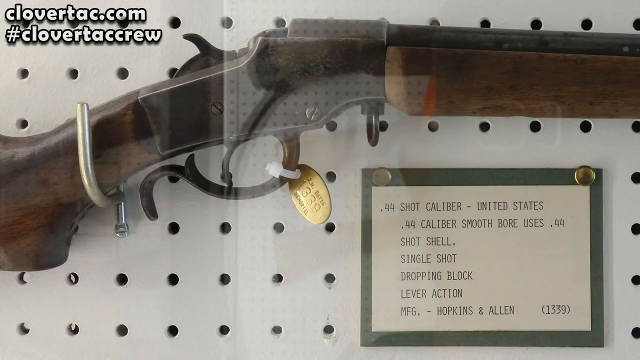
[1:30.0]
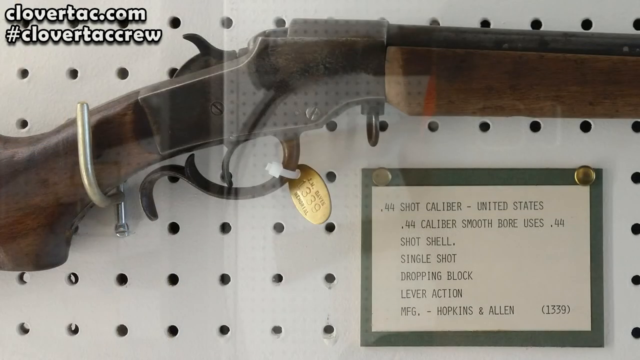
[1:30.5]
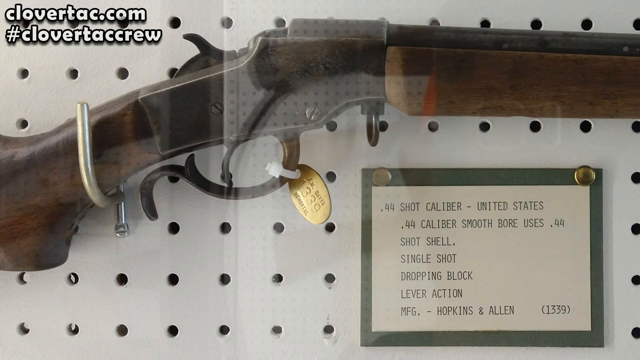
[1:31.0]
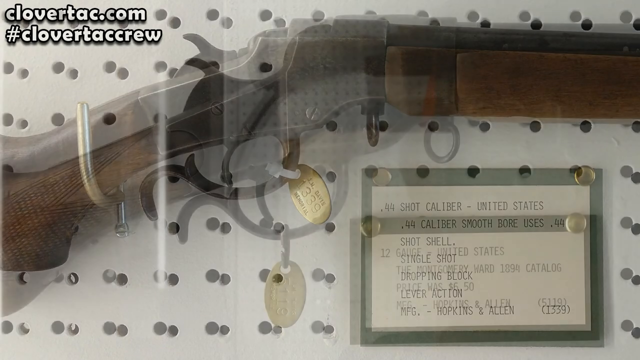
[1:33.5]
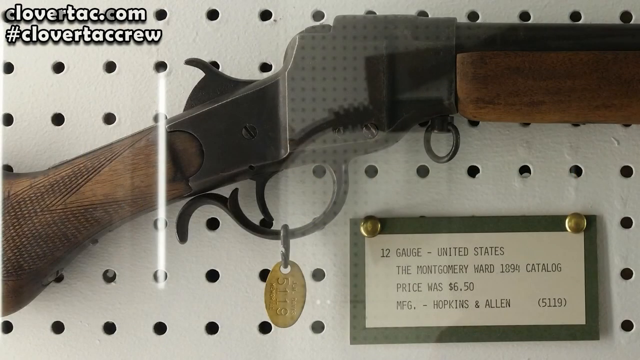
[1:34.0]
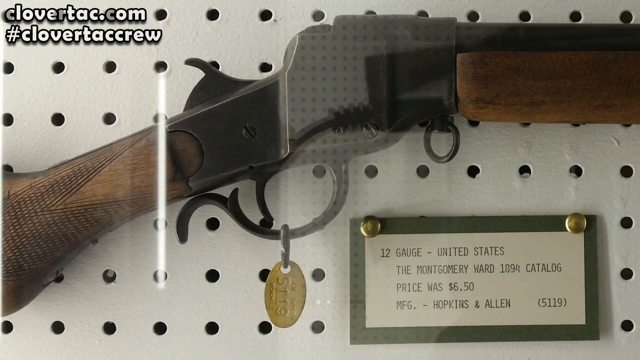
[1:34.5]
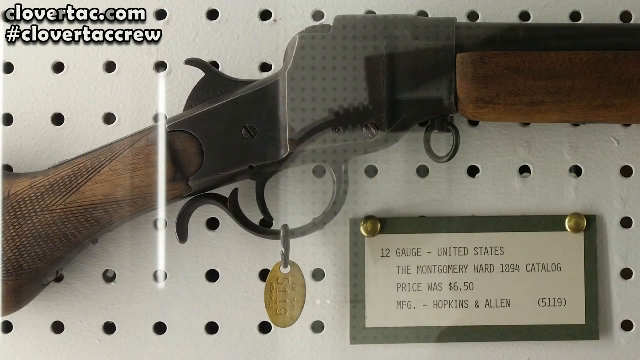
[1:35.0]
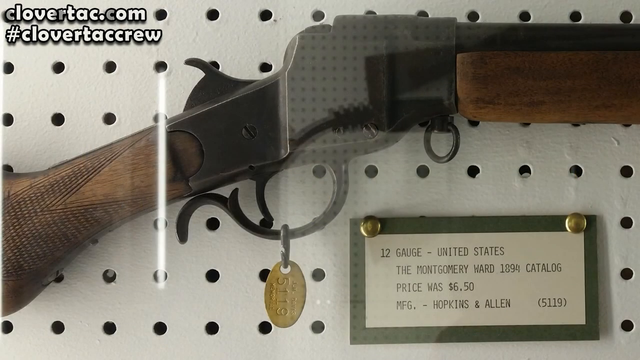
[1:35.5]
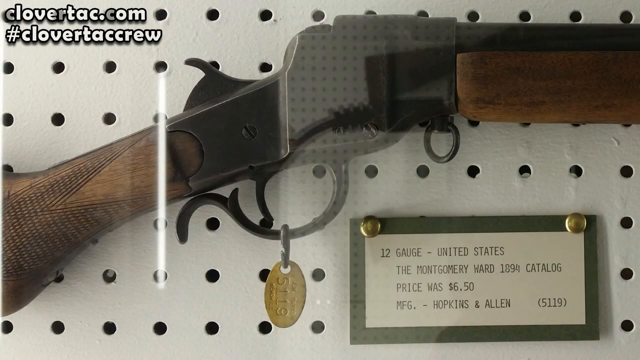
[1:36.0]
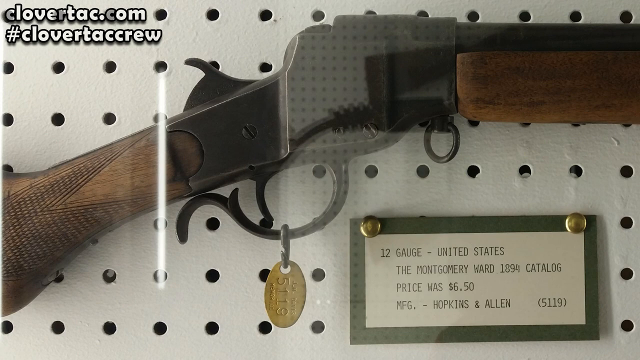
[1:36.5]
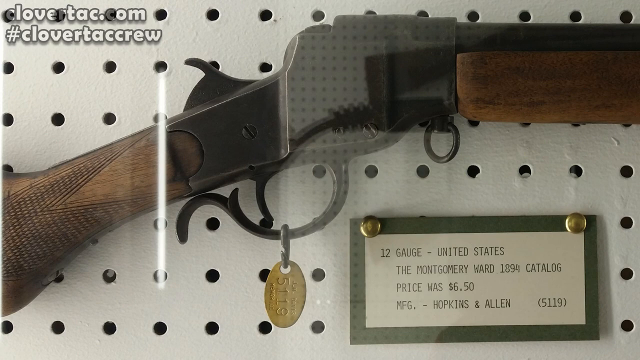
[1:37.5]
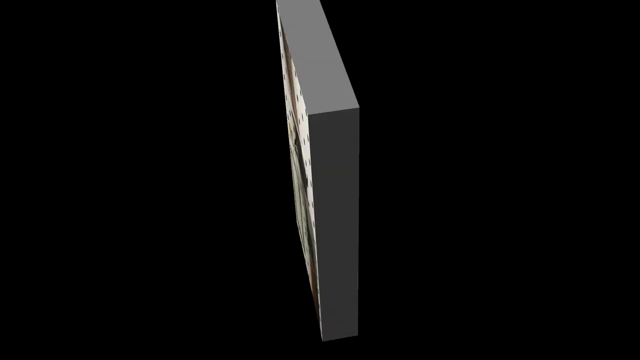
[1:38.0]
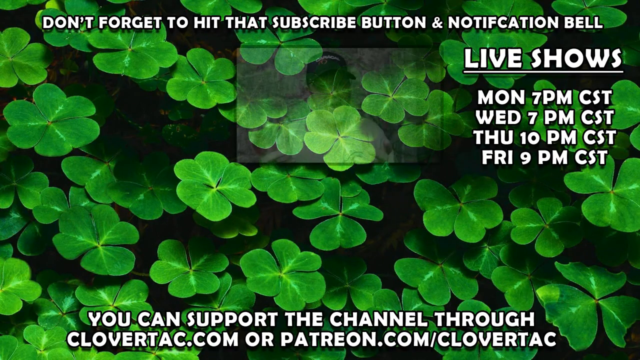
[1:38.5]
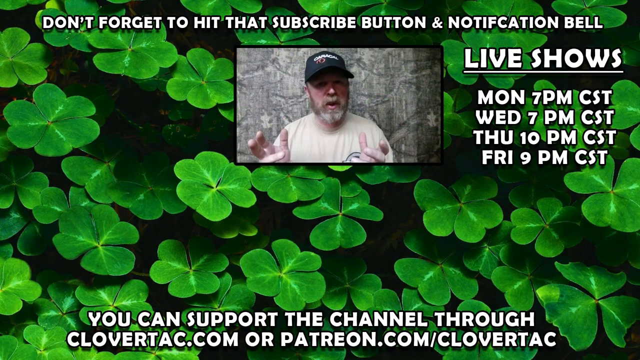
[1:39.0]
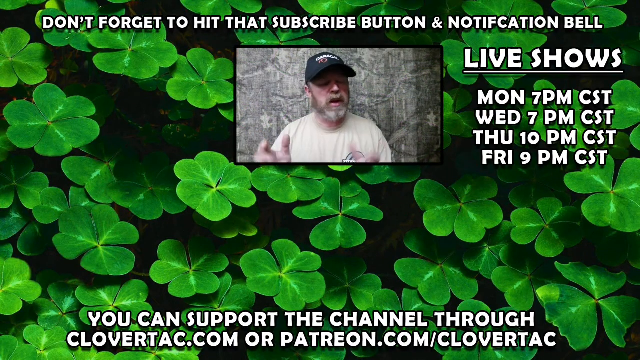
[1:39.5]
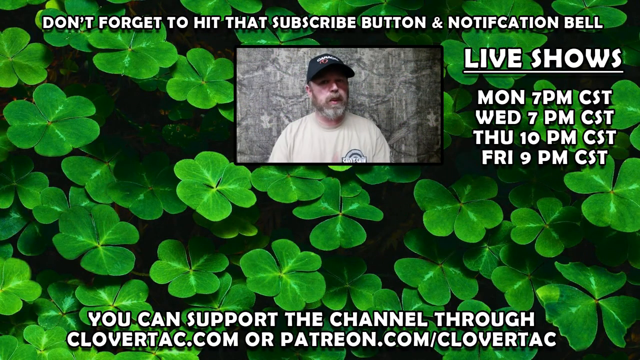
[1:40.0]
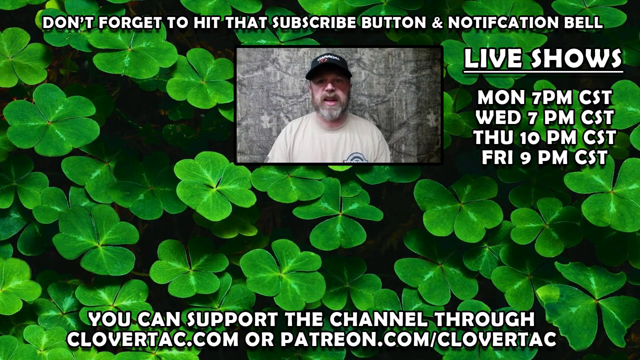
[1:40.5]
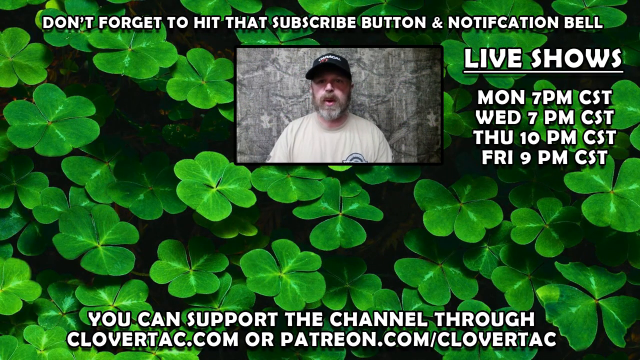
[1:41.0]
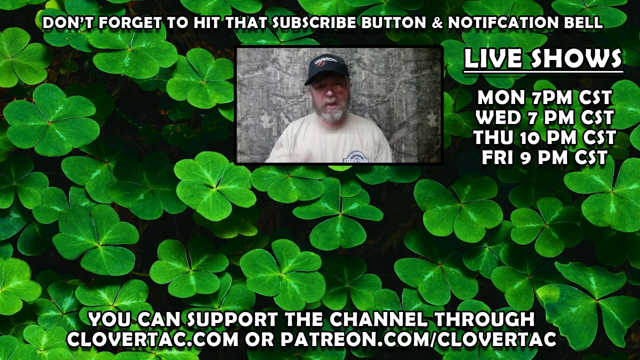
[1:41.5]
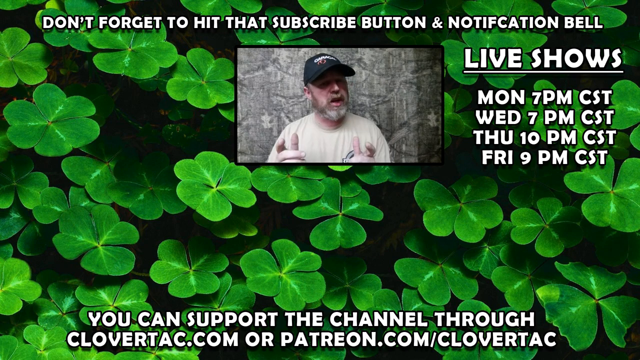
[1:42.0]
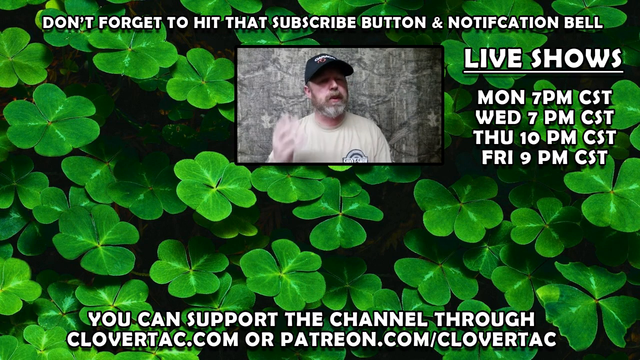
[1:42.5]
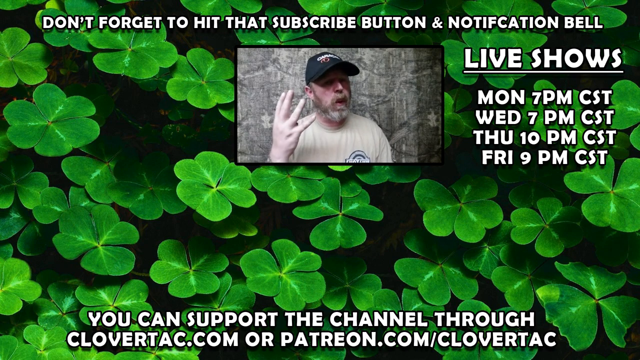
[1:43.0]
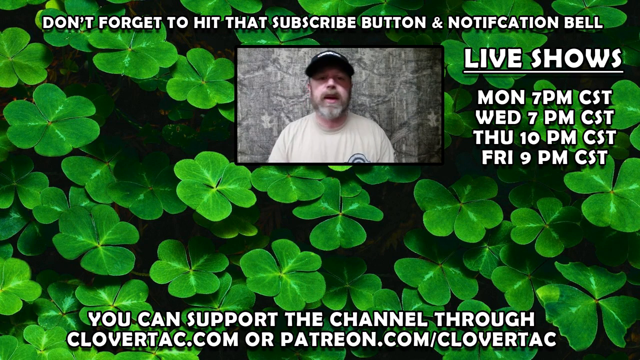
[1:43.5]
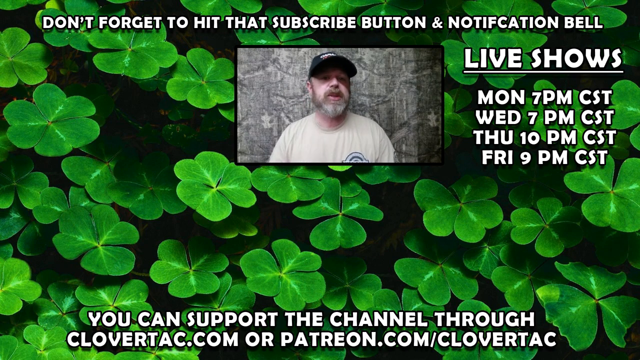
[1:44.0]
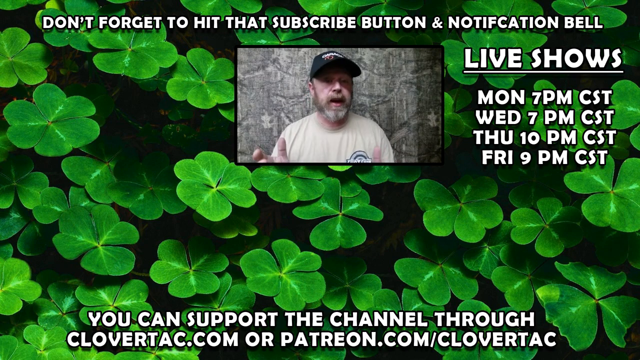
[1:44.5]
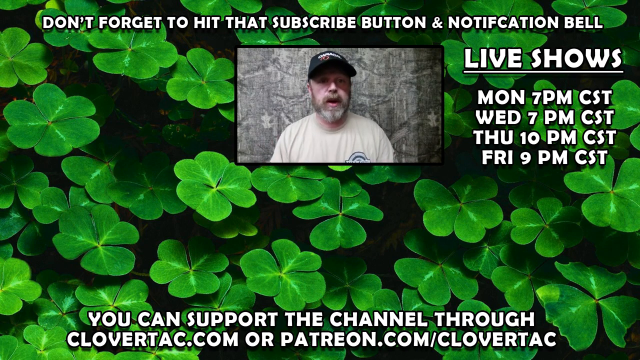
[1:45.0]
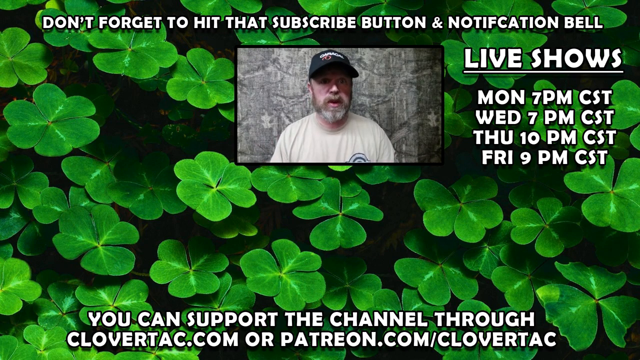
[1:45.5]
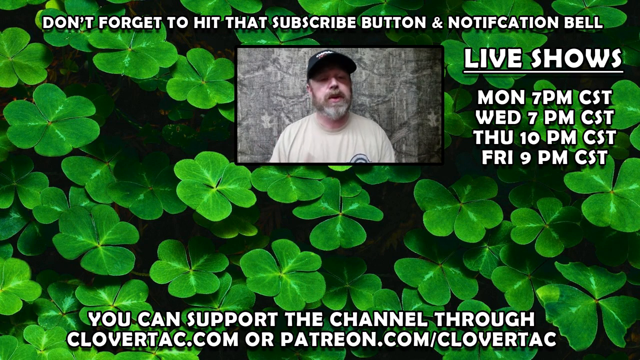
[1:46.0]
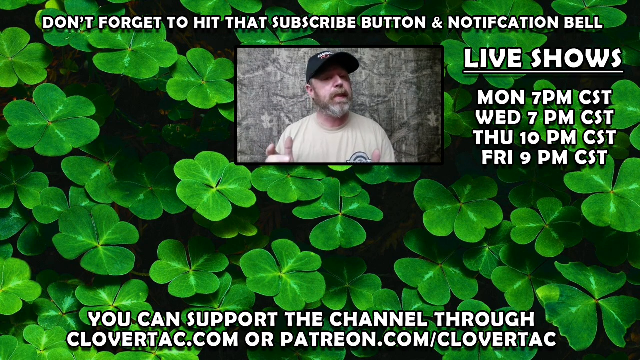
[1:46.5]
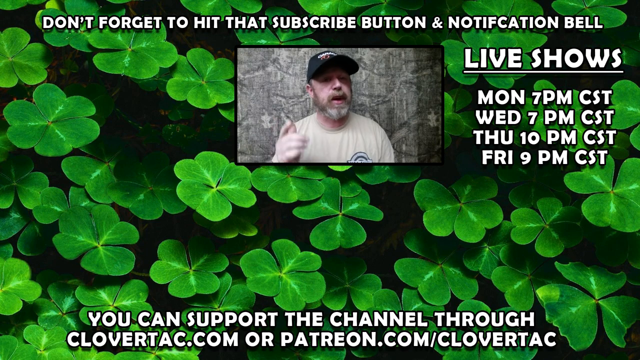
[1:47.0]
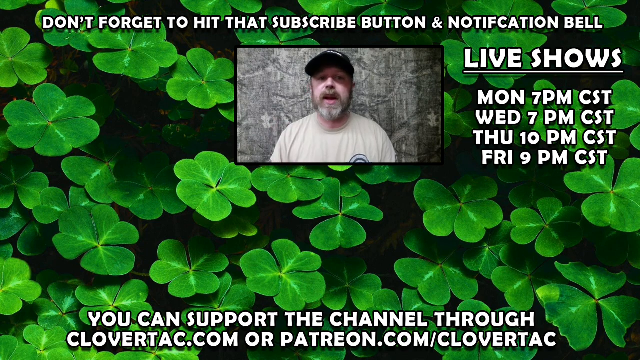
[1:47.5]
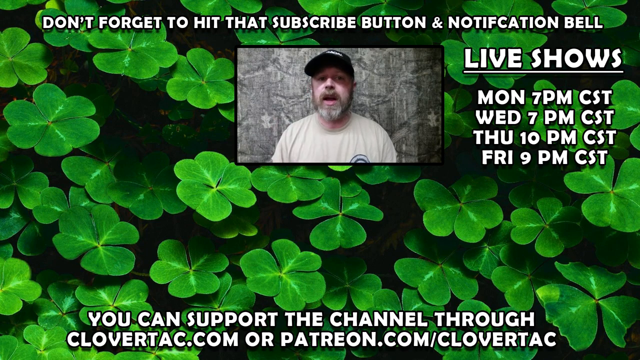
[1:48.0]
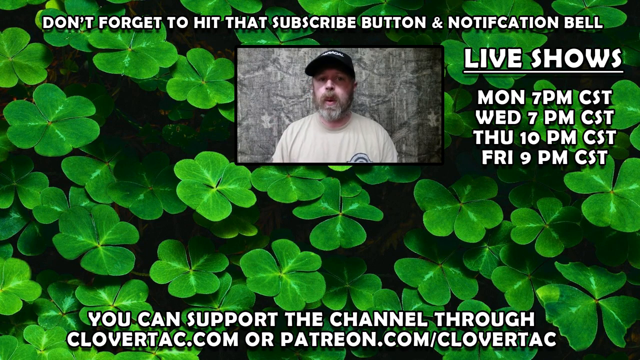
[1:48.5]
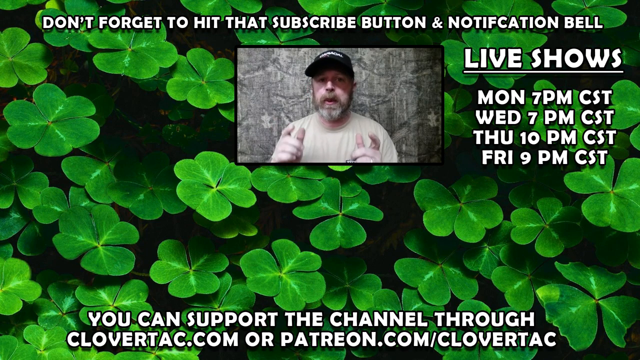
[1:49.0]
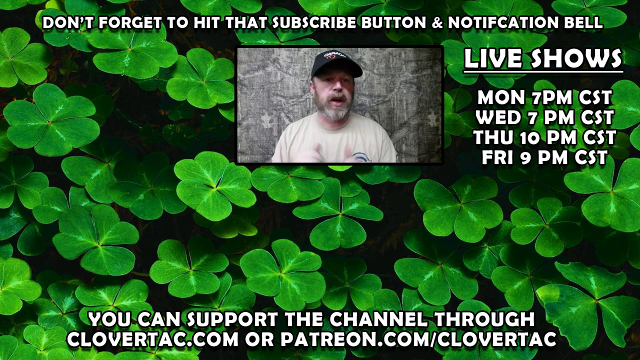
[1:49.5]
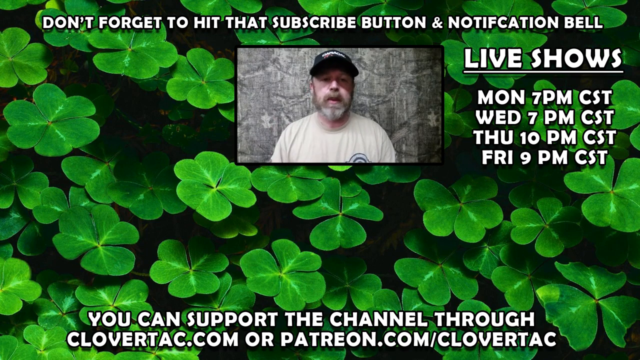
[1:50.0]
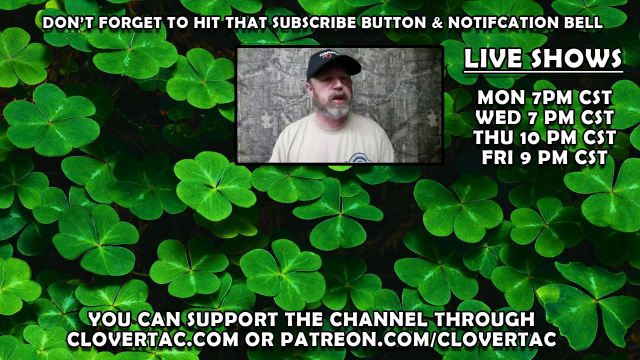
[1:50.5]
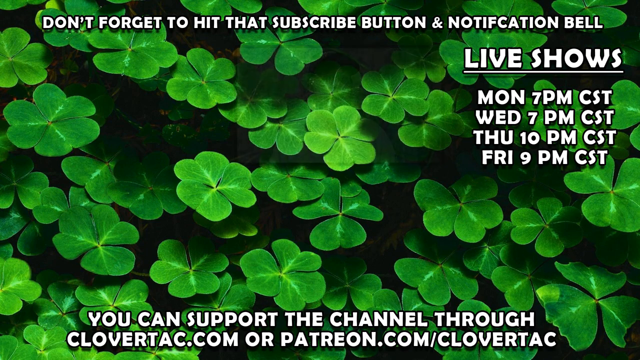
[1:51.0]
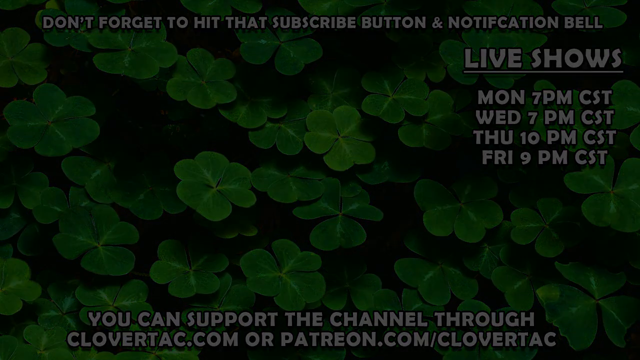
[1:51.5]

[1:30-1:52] A very zoomed-in view shows another shotgun around the middle where the trigger is, with a clearly visible card underneath reading "44 shot caliber, United States, 44 caliber smoothbore, uses .44 shot shell, single shot, dropping block, lever action, MFG Hopkins & Allen (1339)." The next gun's card reads "12-gauge United States," with "the Montgomery Ward 1894 catalog. Price was $6.50" below it and the same "MFG Hopkins & Allen" name below that, with "(5119)." The closing screen shows a bunch of green clovers with the same man up above, talking into the camera from a front view. To the right, text says "live shows" with four listed: "Monday 7pm," "Wednesday 7pm," "Thursday 10pm," and "Friday 9pm." Enlarged white text at the bottom of the screen says "you can support the channel through."